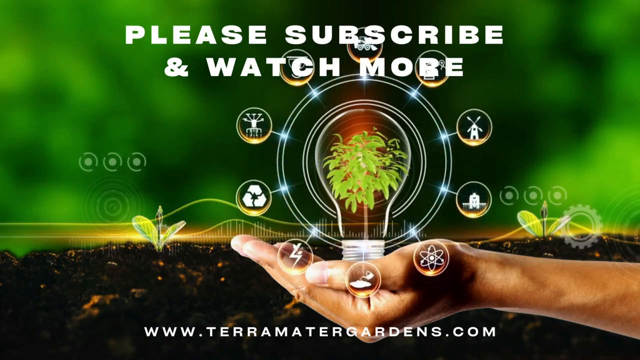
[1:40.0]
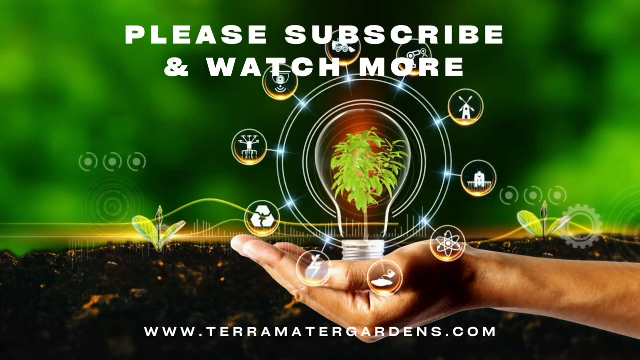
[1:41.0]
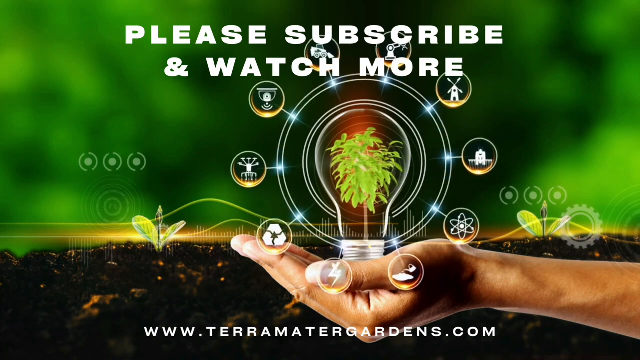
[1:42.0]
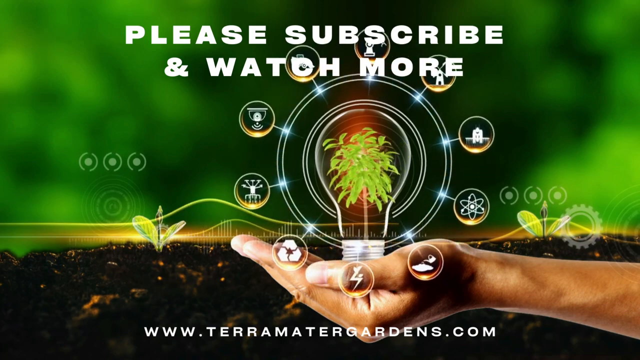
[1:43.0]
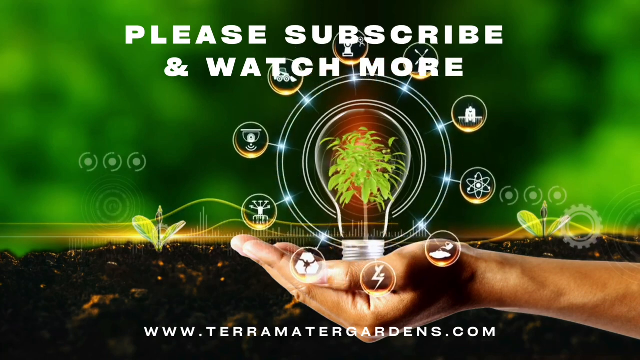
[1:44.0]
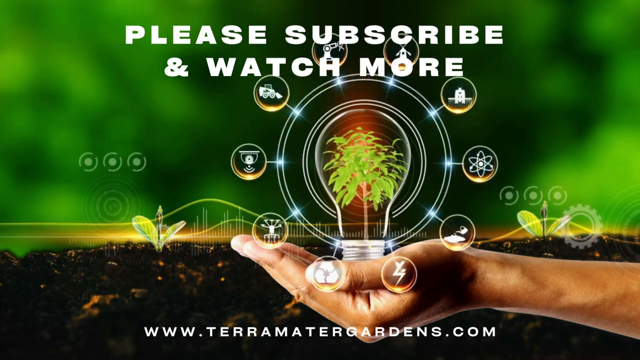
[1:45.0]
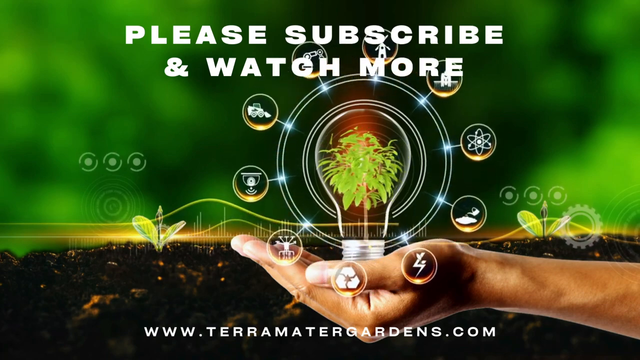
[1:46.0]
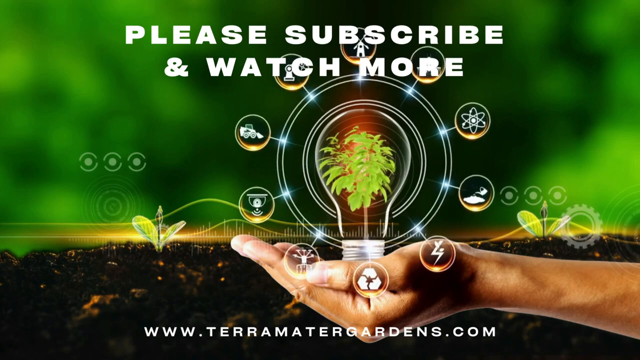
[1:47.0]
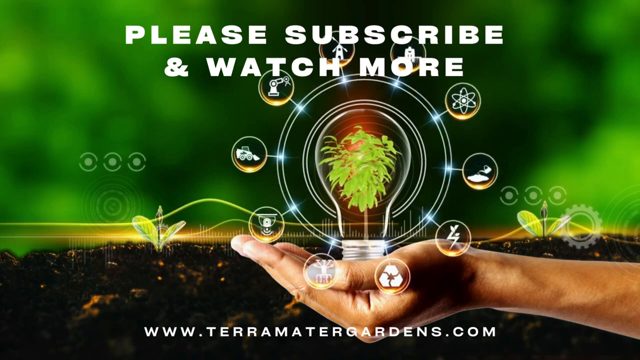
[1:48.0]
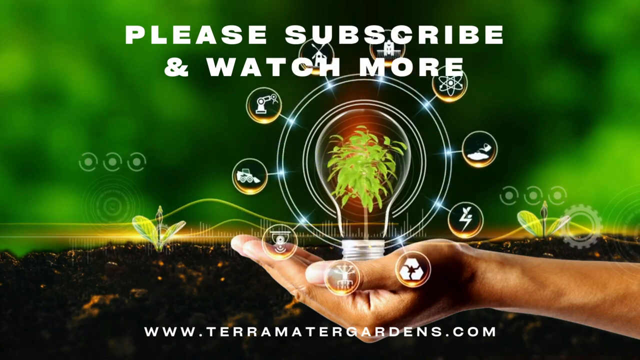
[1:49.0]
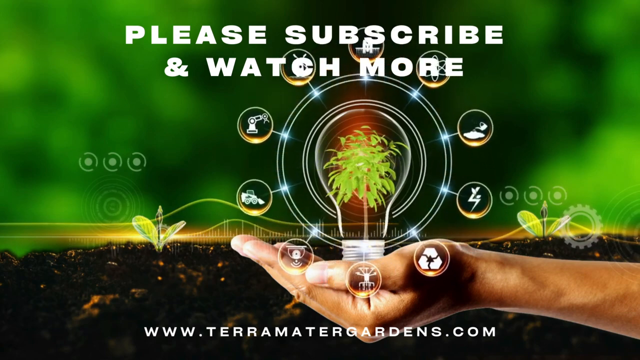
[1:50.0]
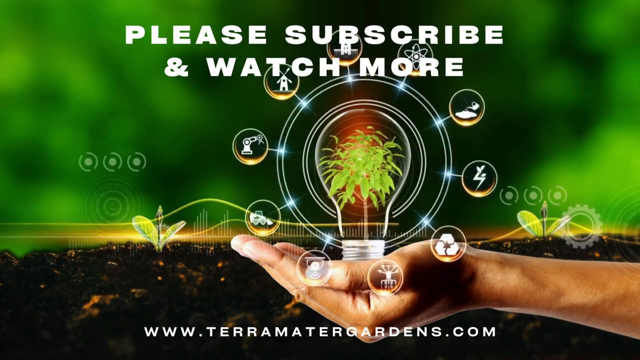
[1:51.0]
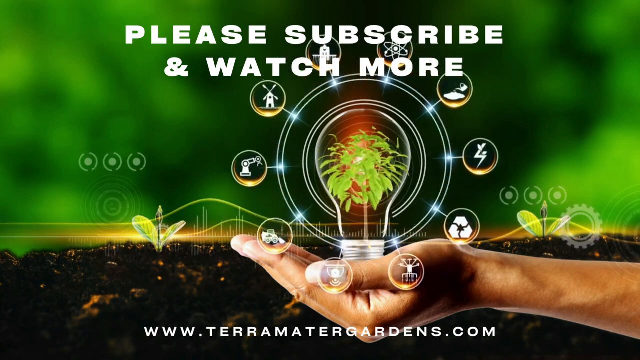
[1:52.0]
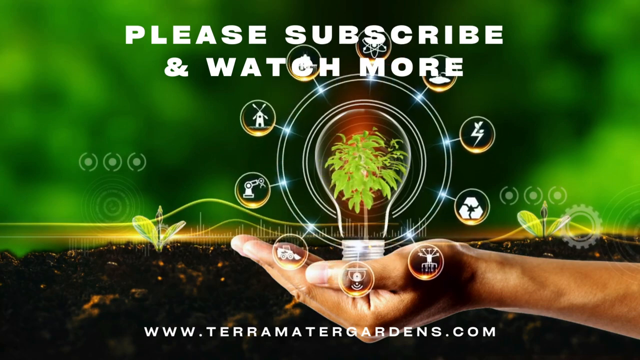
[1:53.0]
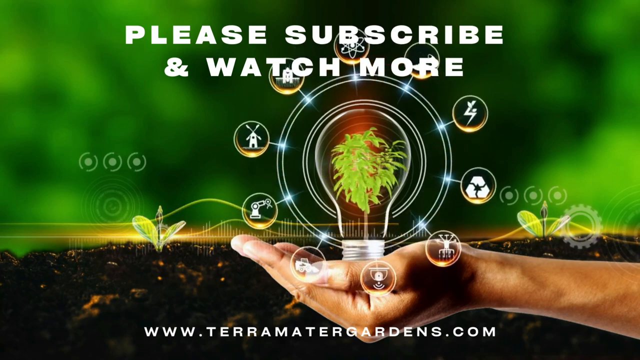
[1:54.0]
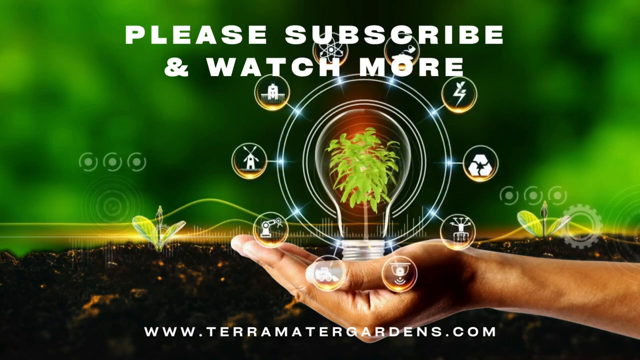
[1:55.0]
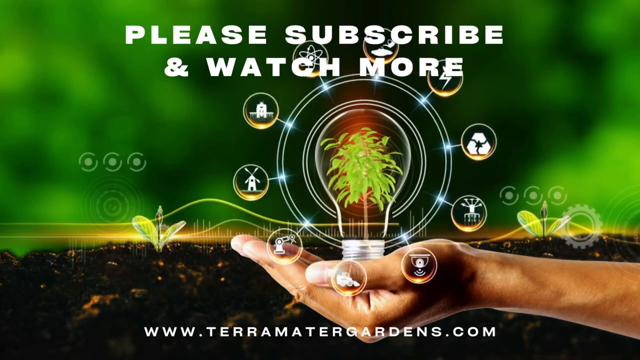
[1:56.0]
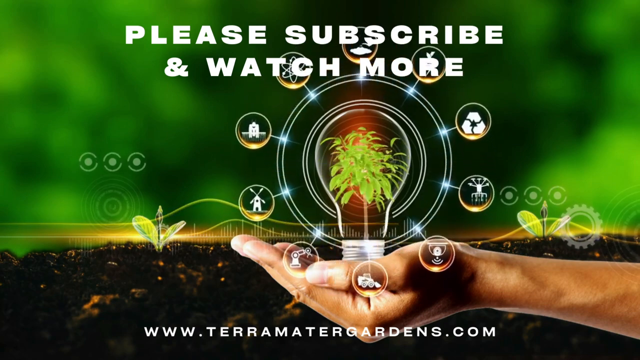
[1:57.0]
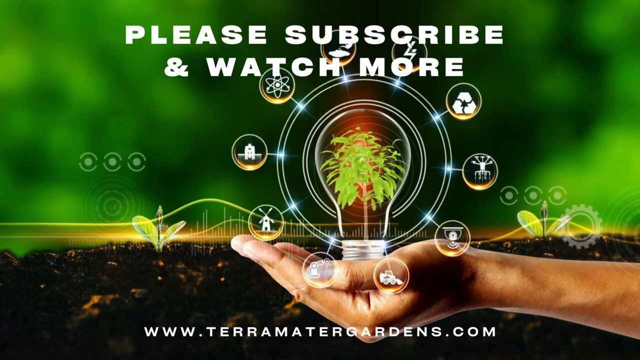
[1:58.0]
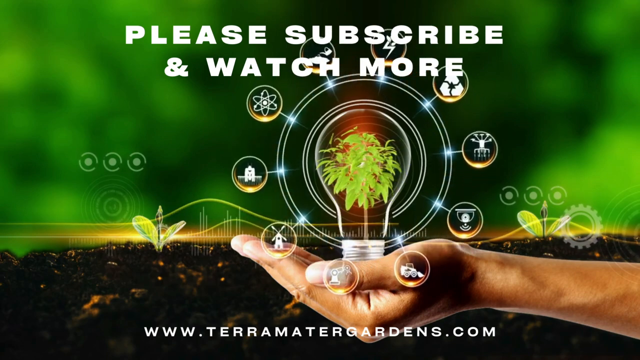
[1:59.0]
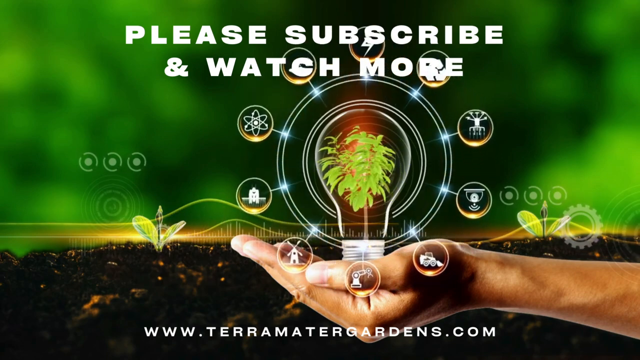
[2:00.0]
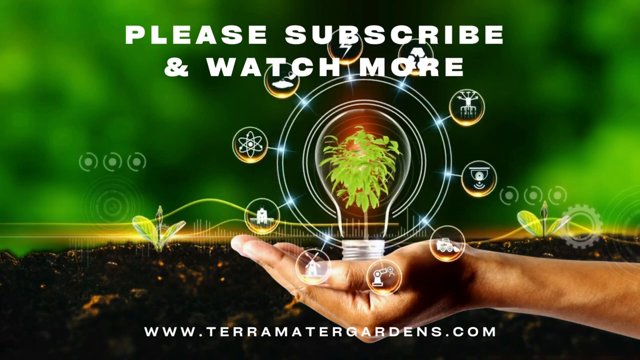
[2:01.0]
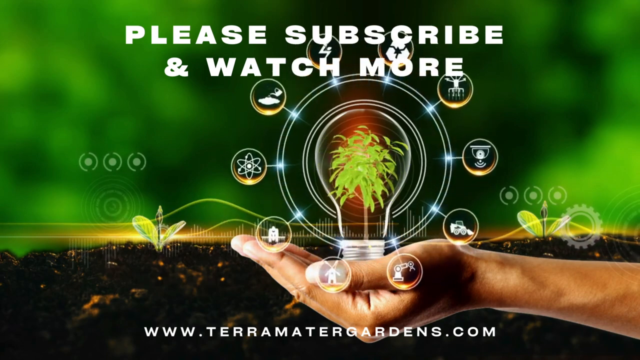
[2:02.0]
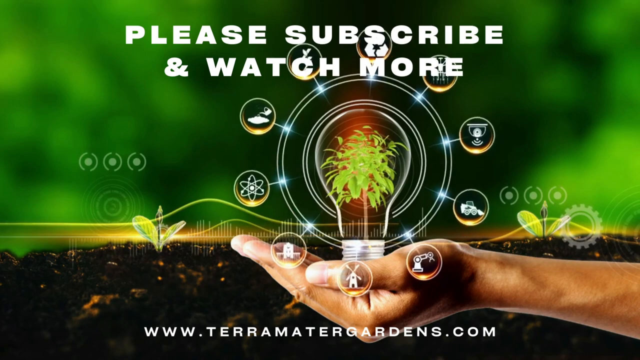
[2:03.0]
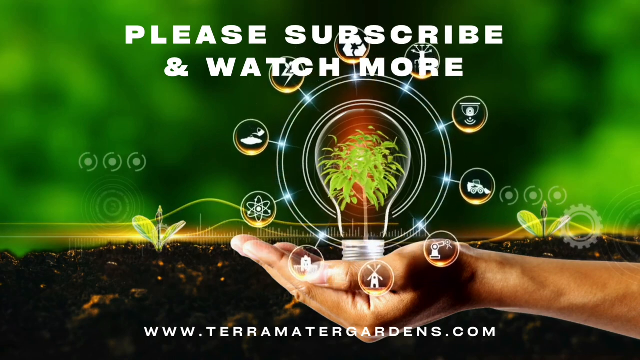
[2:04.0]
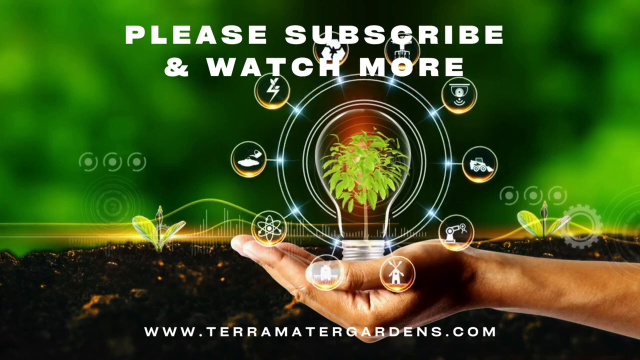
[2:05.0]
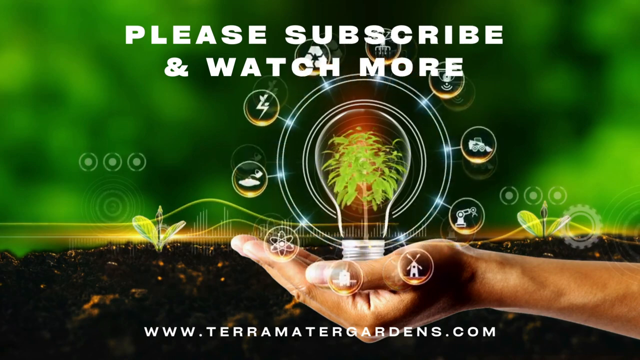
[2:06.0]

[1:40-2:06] A white hand cups a lightbulb with a picture of a green plant in its middle. The lightbulb is surrounded by two circles, and ten little projections come off the outer circle, each ending in a tinier circle containing an image. In the background there appears to be brown dirt at the bottom, with a blurred greenish background above it. White text across the upper middle of the screen reads "please subscribe & watch more", with the word "and" written as an ampersand.